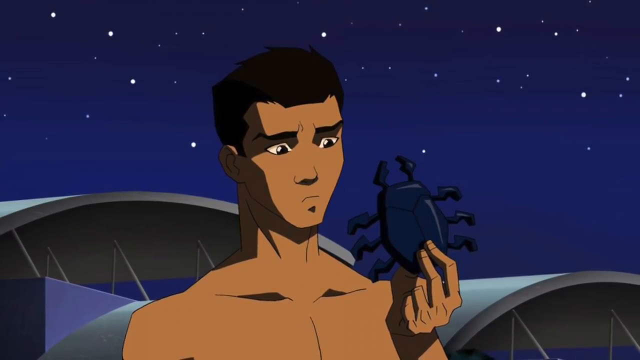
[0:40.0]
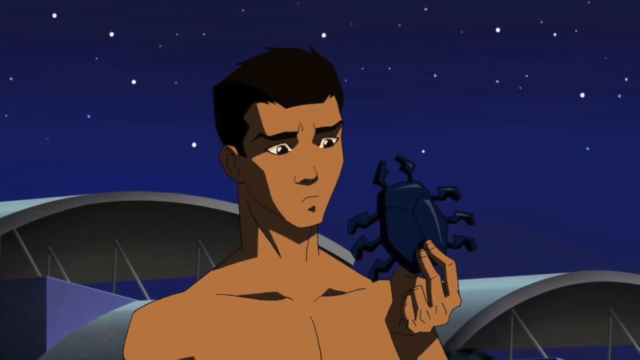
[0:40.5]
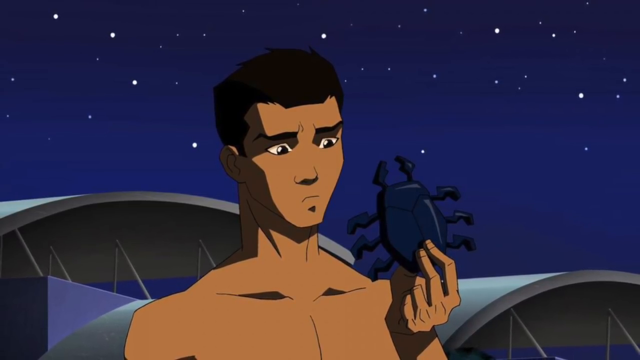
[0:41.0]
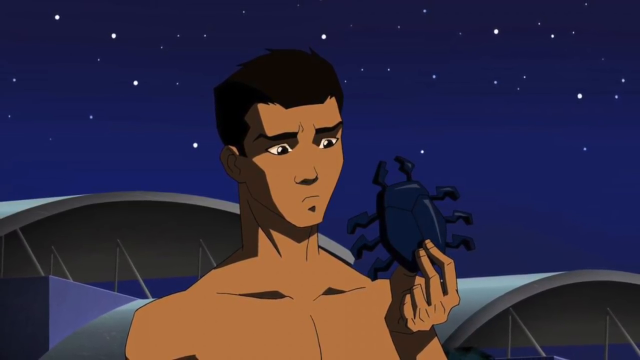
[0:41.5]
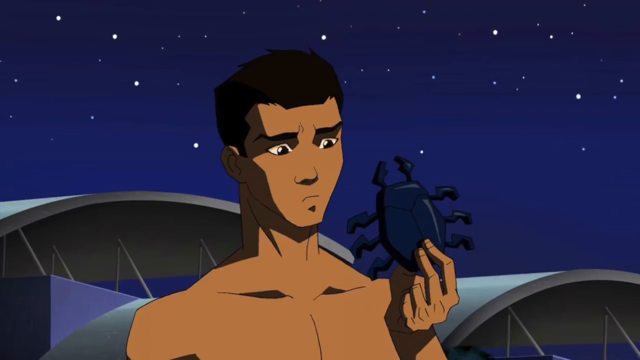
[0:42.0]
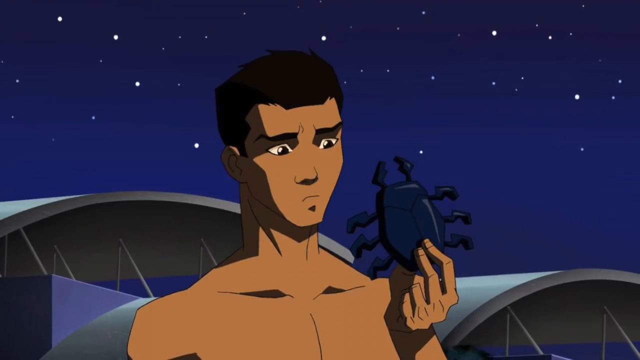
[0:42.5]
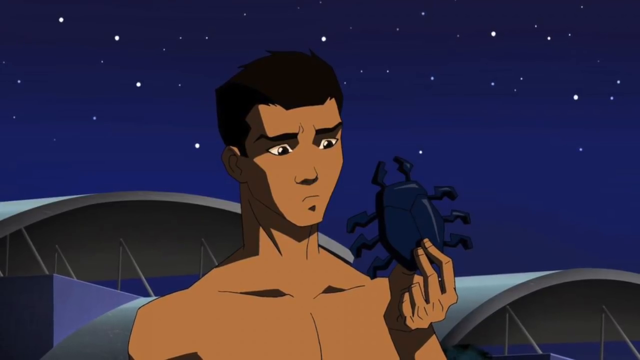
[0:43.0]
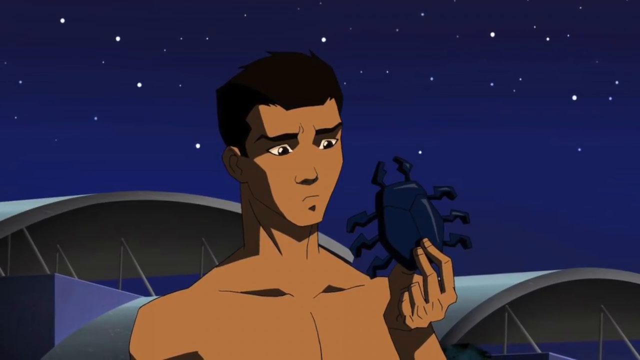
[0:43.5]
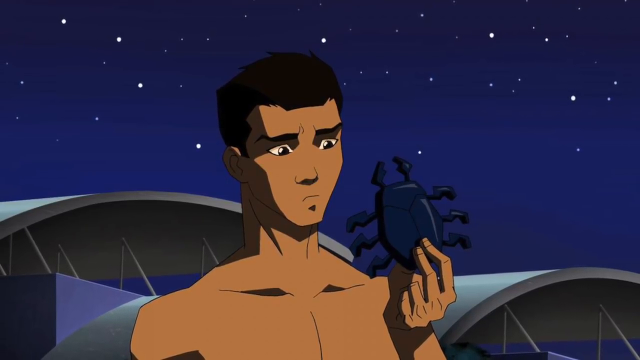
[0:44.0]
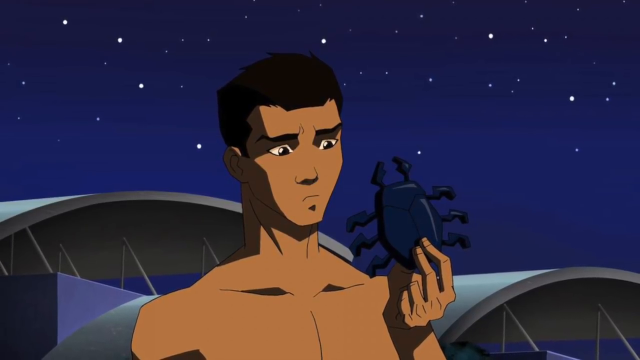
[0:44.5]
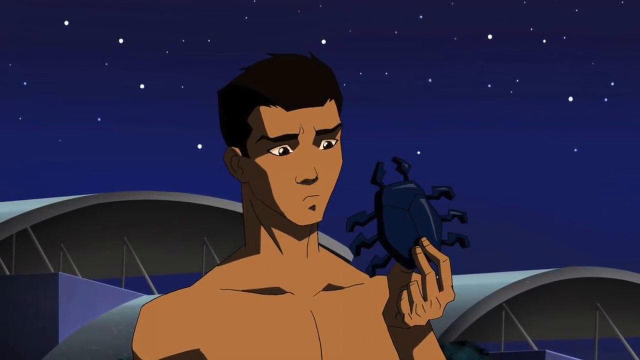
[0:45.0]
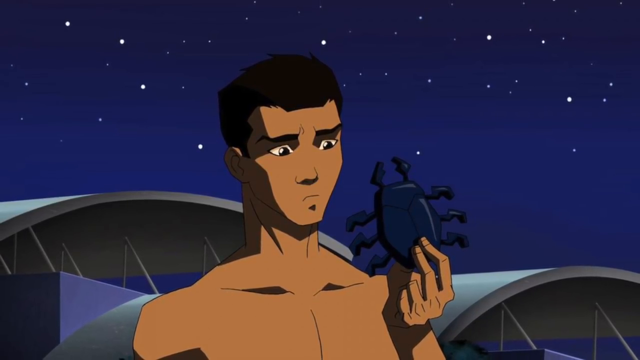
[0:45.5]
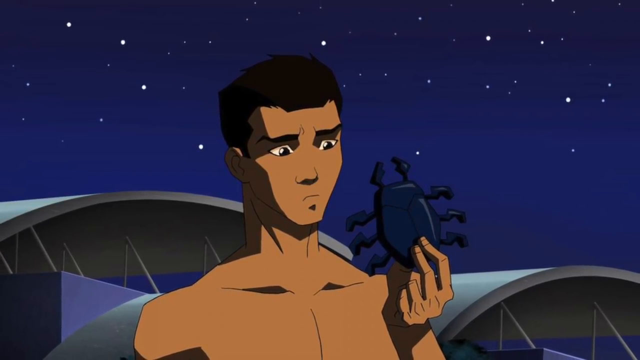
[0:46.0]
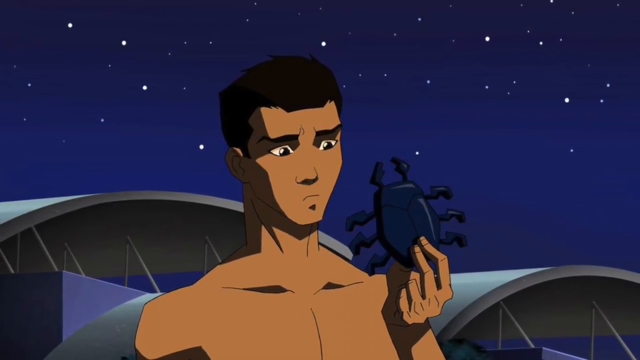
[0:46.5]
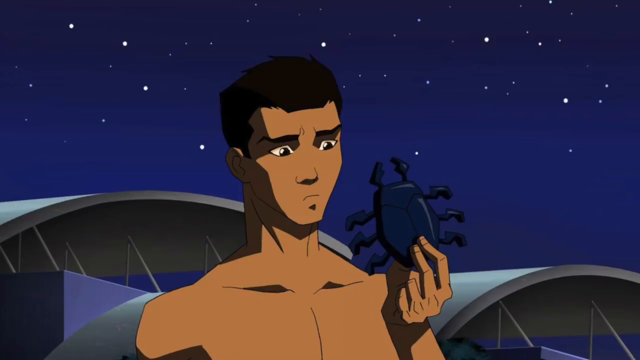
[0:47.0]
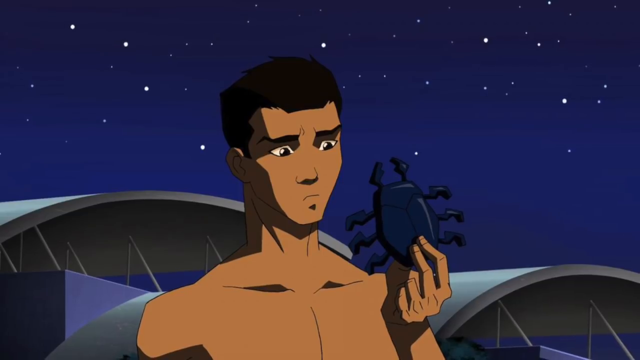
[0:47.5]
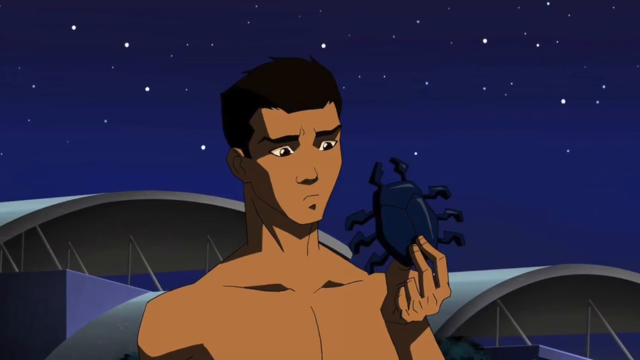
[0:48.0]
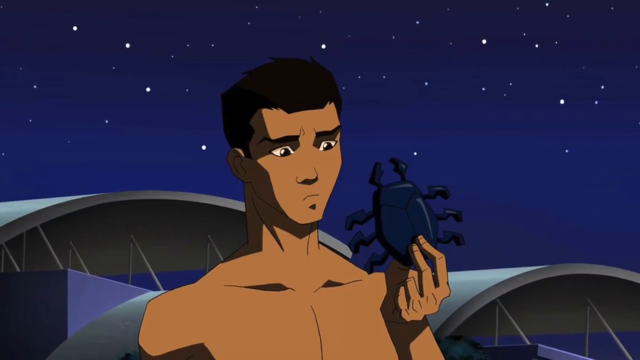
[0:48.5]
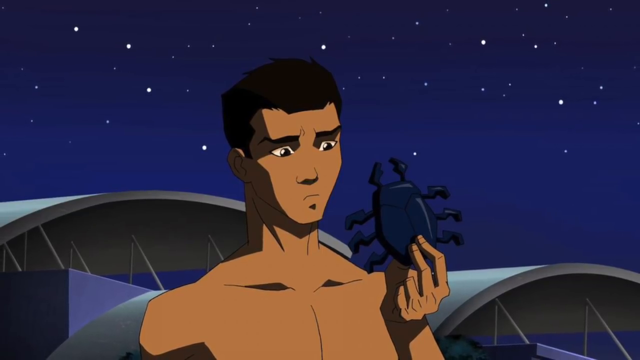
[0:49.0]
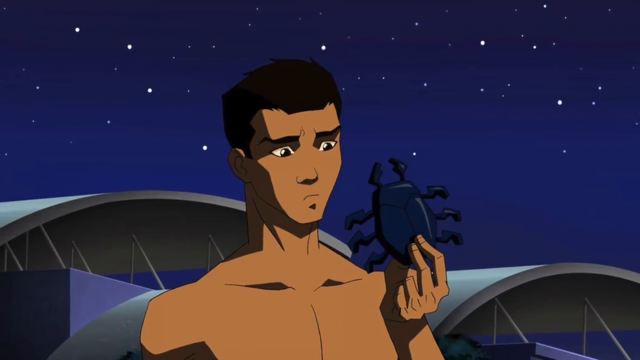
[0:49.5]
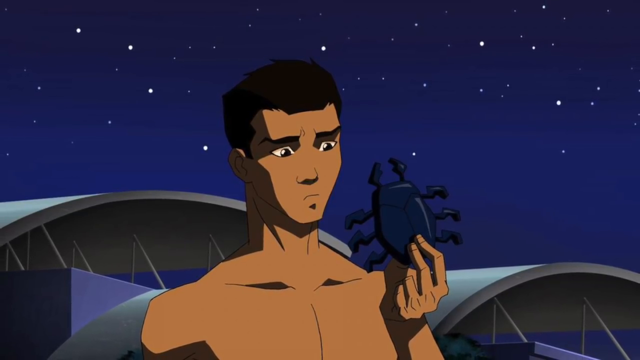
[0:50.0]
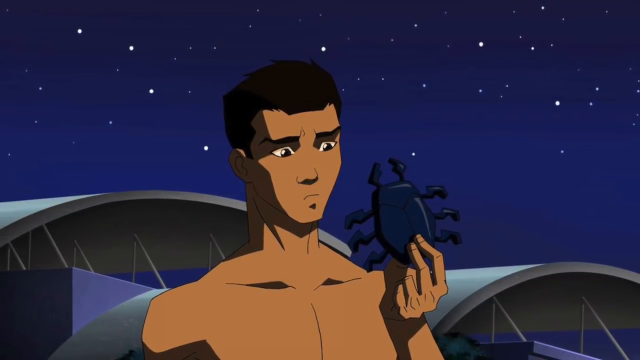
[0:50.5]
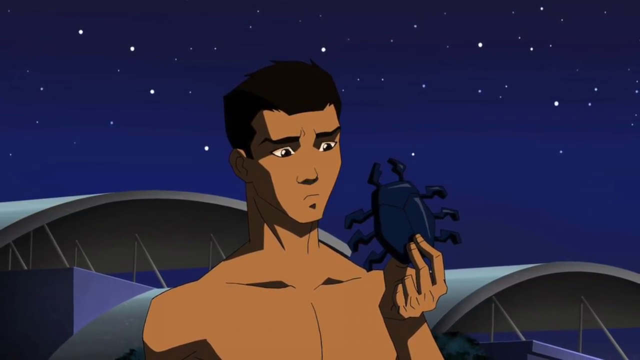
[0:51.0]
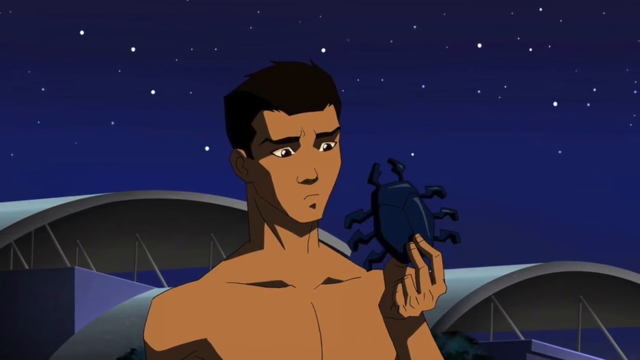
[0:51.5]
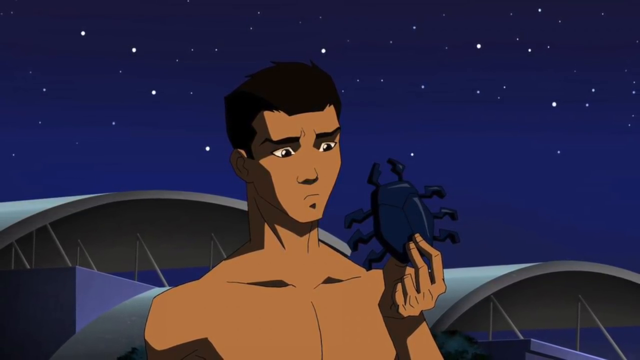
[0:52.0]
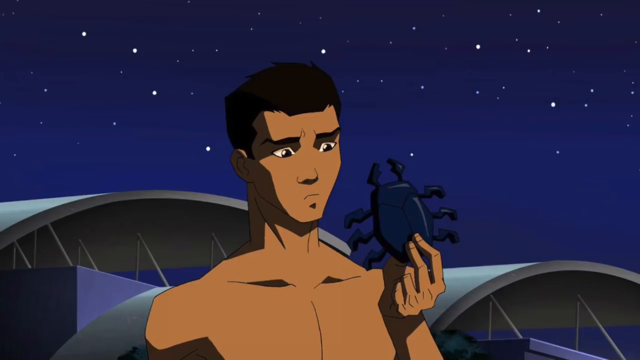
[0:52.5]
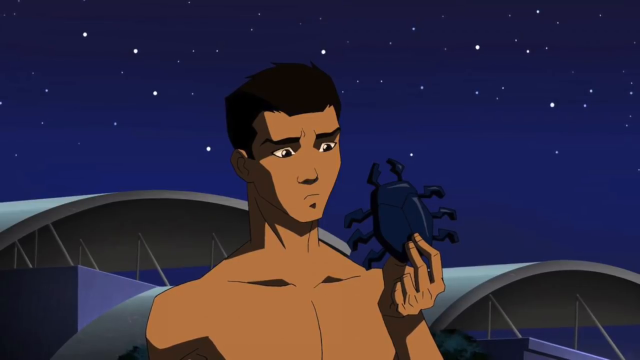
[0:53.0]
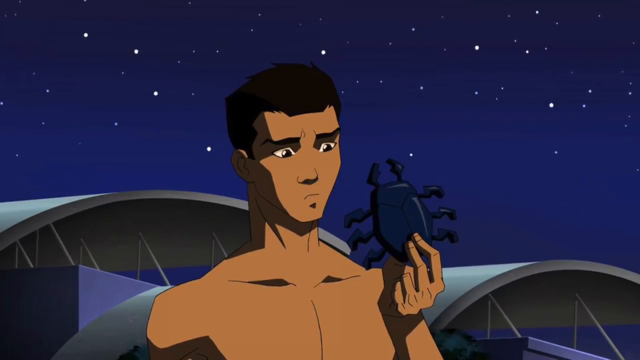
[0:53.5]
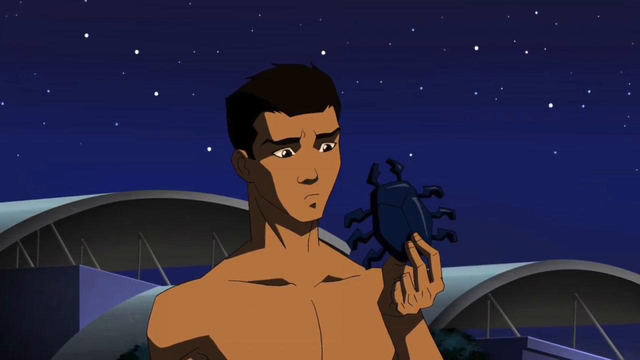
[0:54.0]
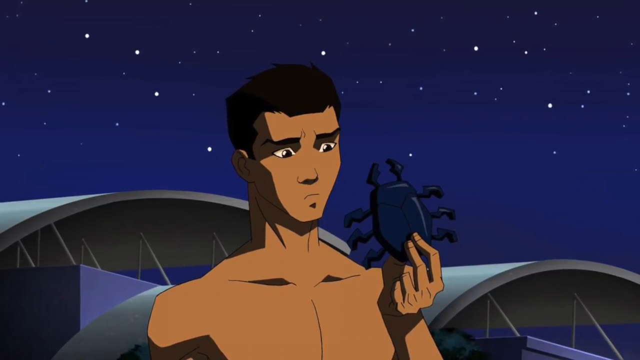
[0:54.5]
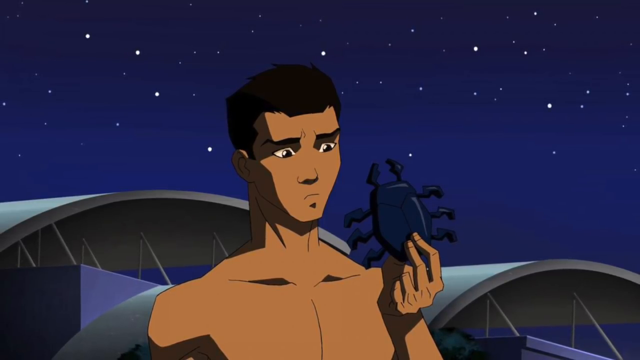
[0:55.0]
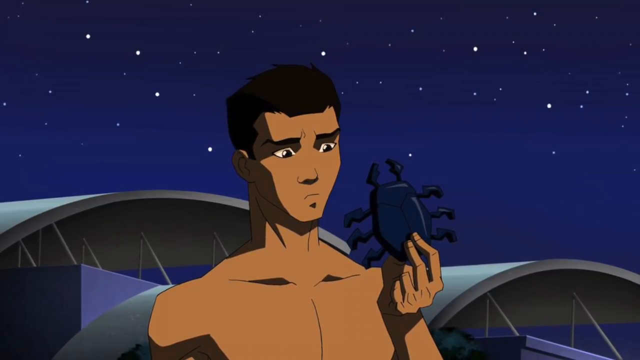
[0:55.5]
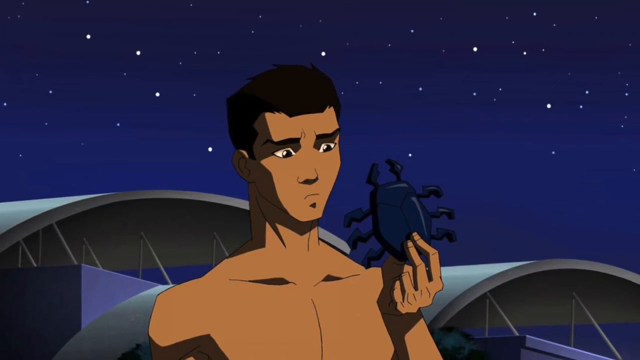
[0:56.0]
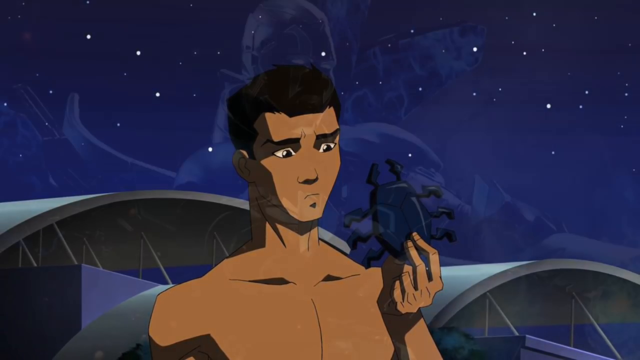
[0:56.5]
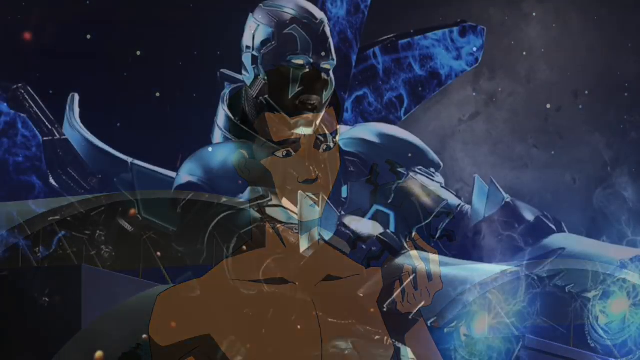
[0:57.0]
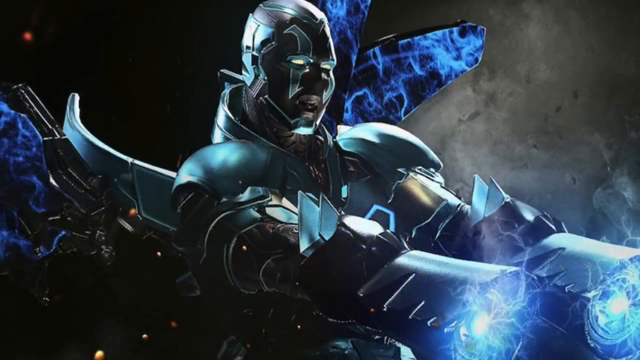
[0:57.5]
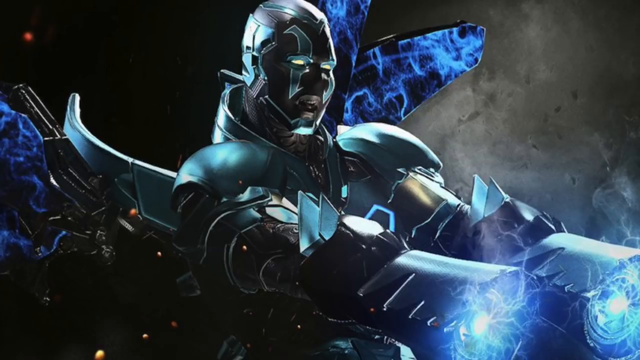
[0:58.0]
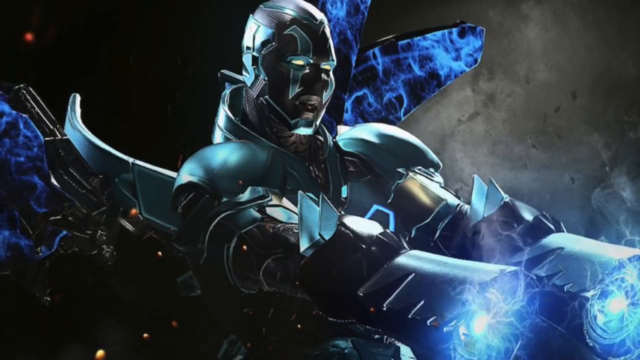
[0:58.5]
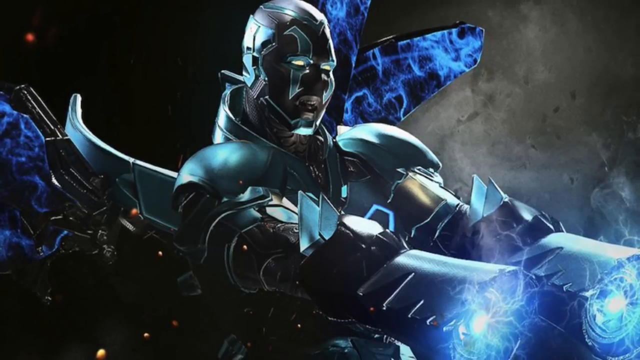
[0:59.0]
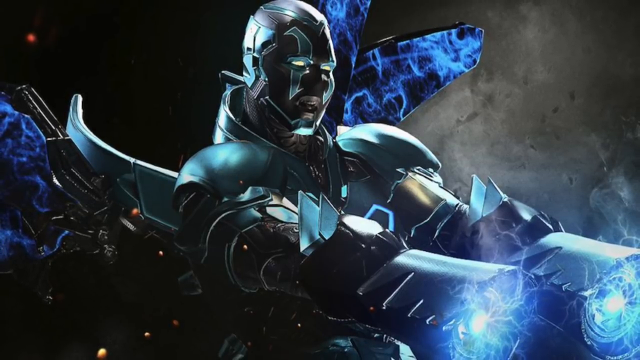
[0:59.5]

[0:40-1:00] Against the blue dark sky, the shirtless man holds the blue scarab and looks at it quizzically. The camera sort of pans outwards, showing more of his body, especially his chest, and a little more of the buildings behind him. He moves the blue scarab further and further towards his face, looking at it closely. The scene then changes to sort of a superhero action figure wearing mainly cyan metal armour all over his body, along with some black. He looks a little menacing, a bit scary and a bit evil. He possibly sits on some sort of vehicle, maybe a superhero version of a motorcycle, and the background looks like he is approaching a planet, perhaps a moon of some sort. He appears to be in space.